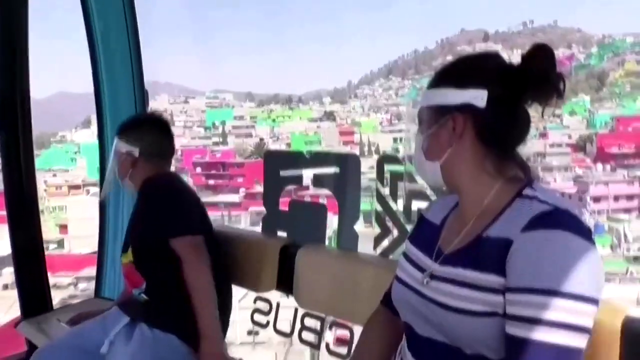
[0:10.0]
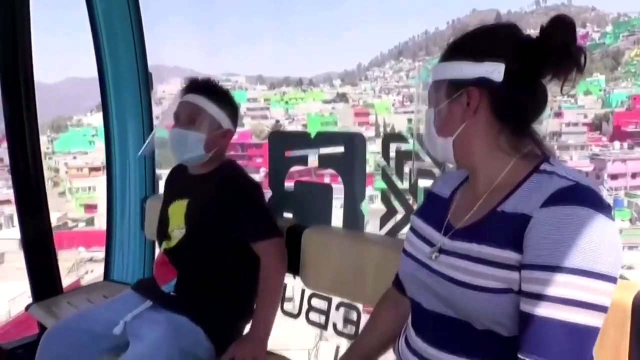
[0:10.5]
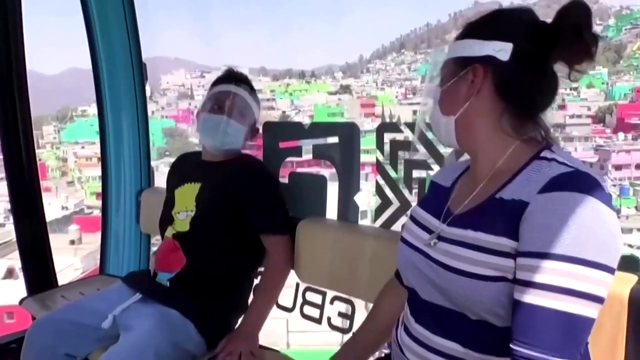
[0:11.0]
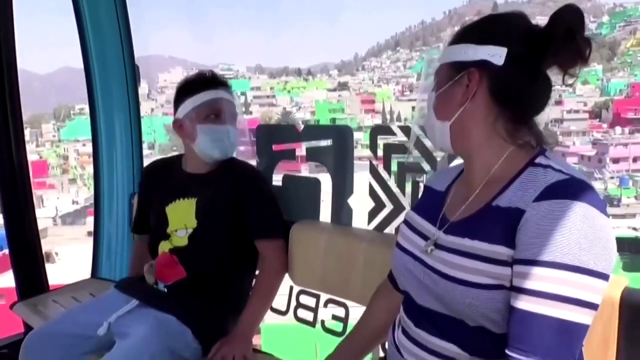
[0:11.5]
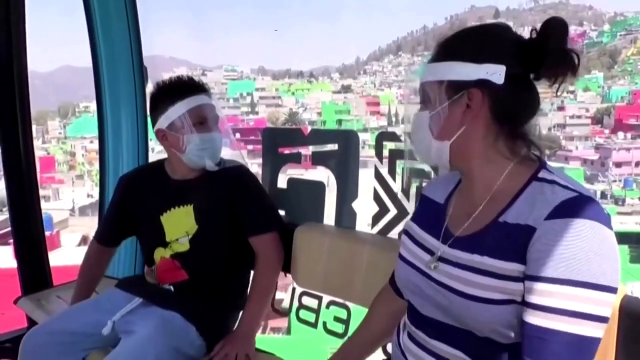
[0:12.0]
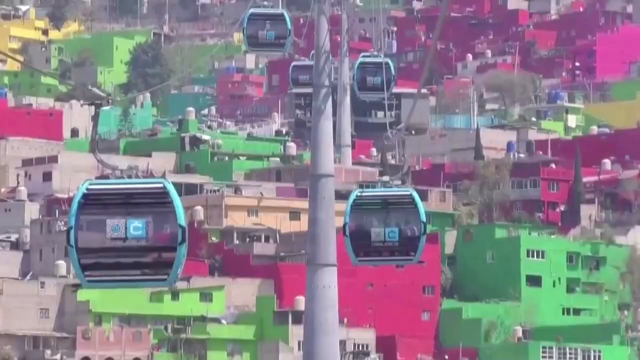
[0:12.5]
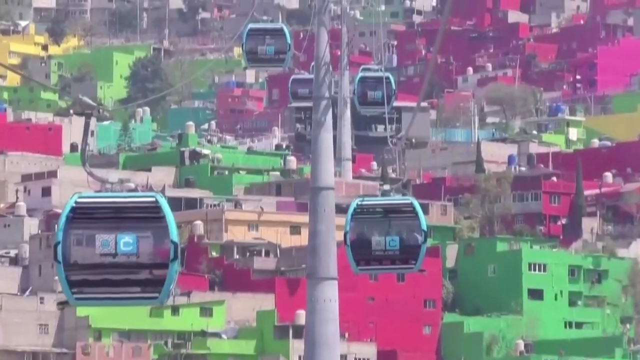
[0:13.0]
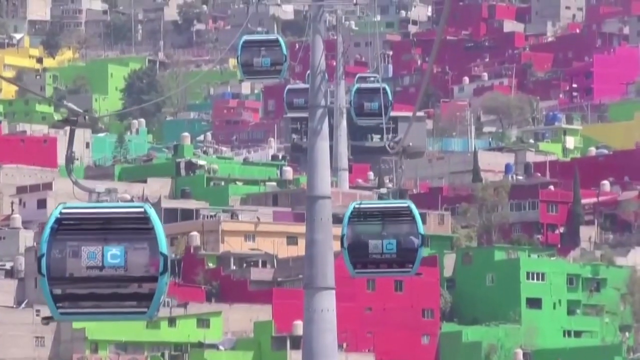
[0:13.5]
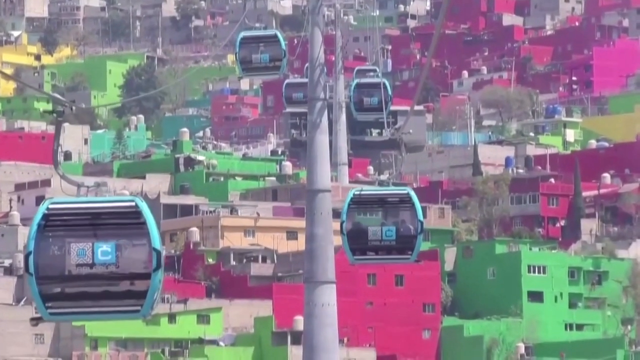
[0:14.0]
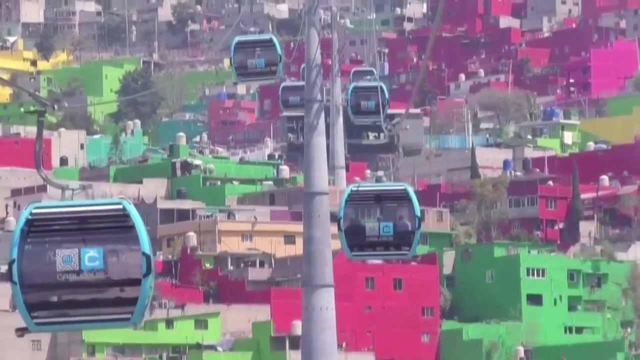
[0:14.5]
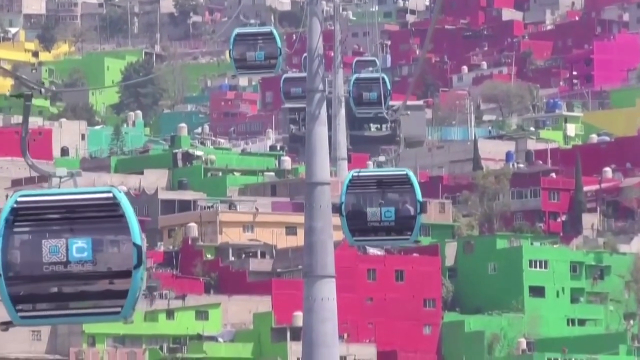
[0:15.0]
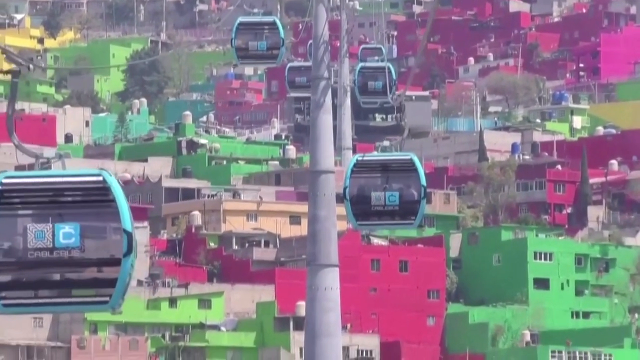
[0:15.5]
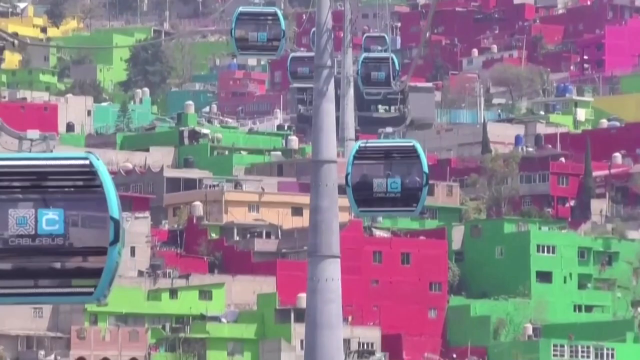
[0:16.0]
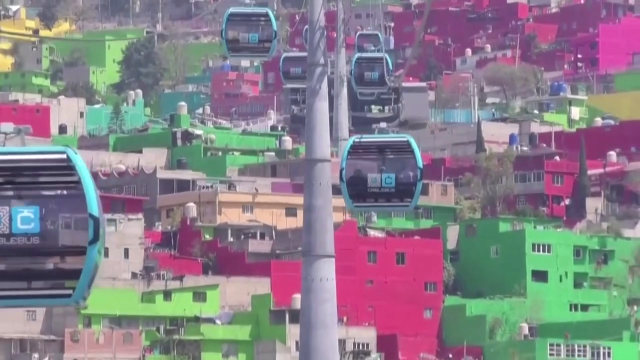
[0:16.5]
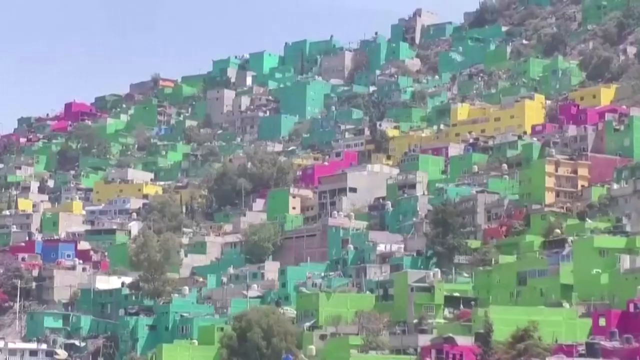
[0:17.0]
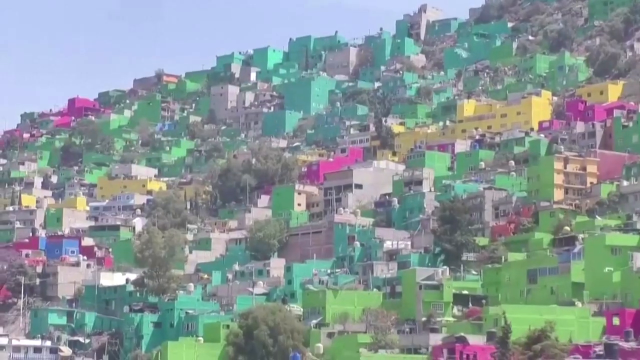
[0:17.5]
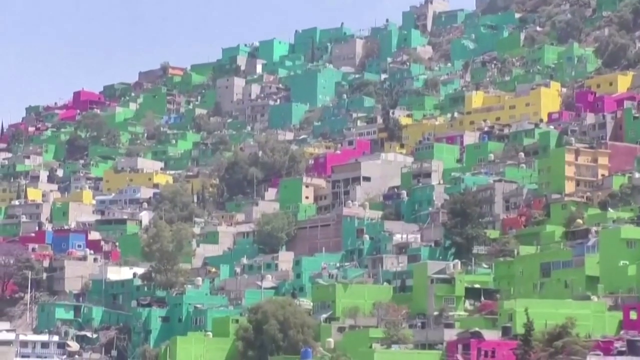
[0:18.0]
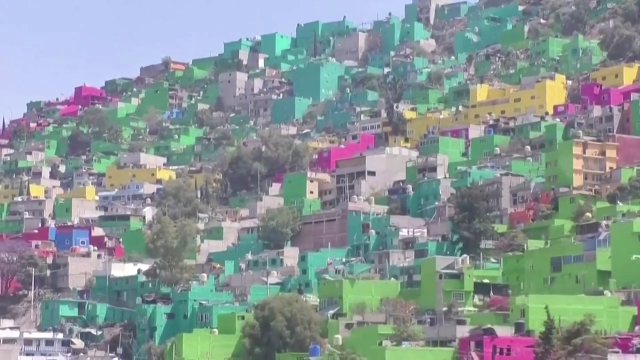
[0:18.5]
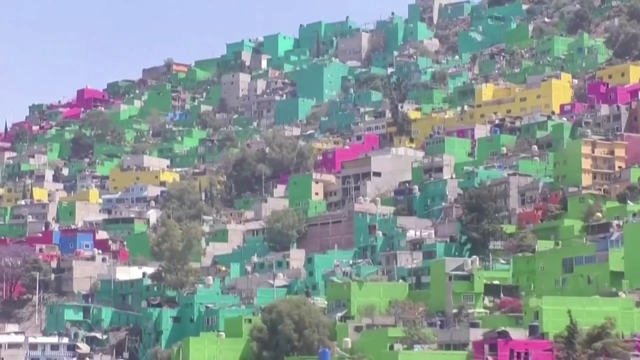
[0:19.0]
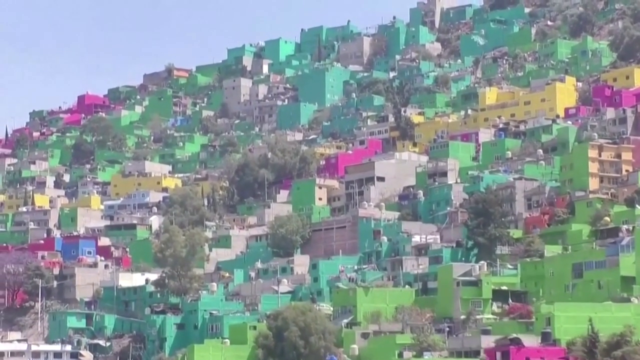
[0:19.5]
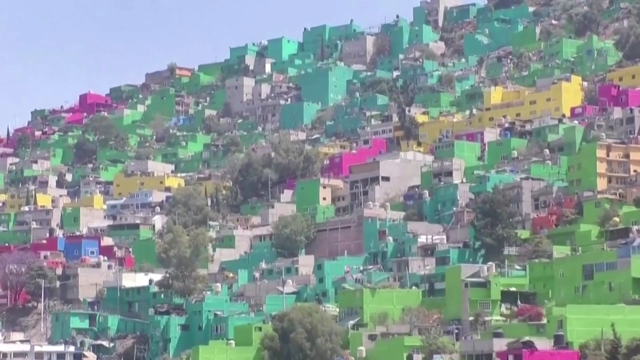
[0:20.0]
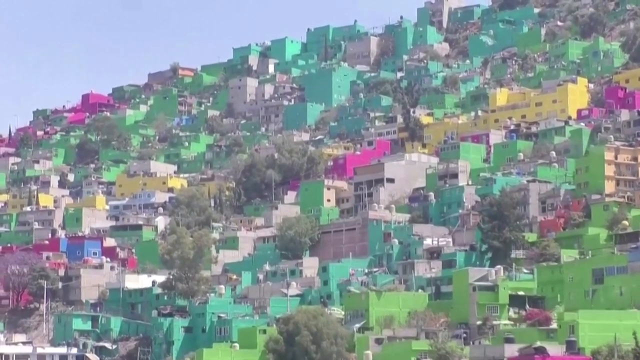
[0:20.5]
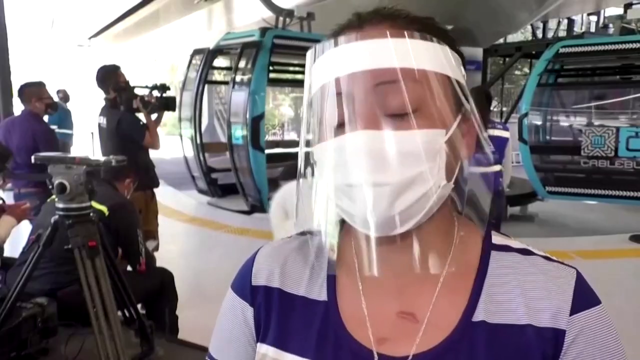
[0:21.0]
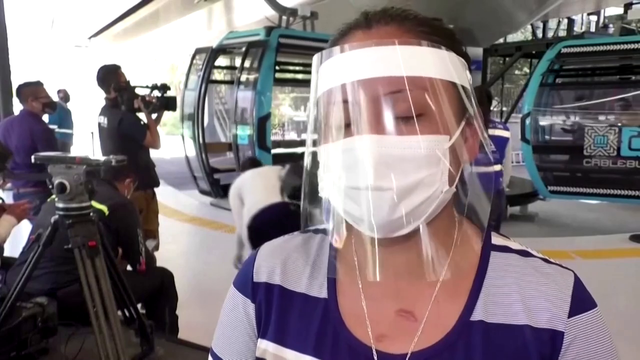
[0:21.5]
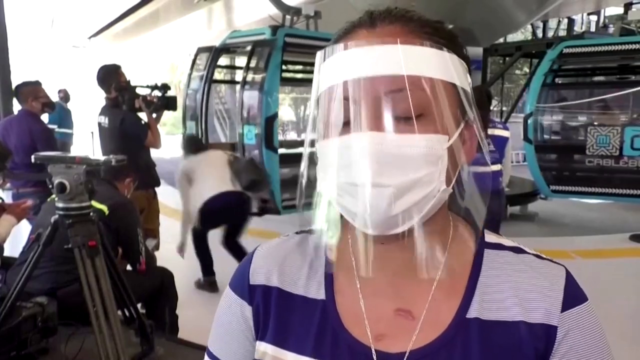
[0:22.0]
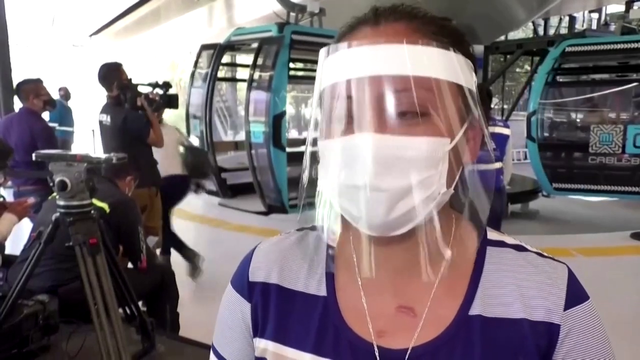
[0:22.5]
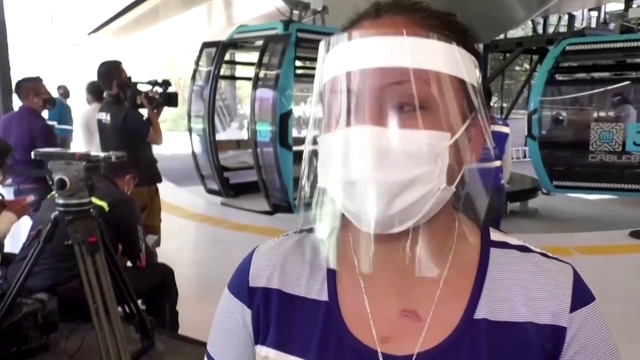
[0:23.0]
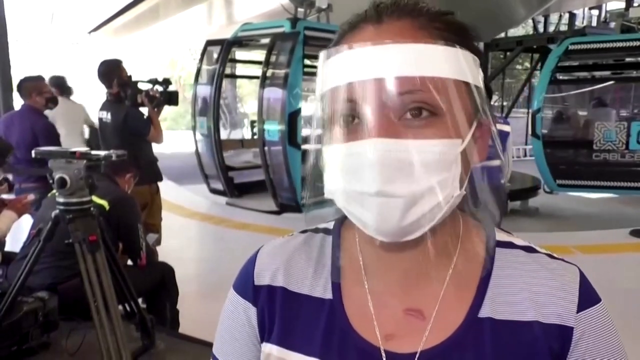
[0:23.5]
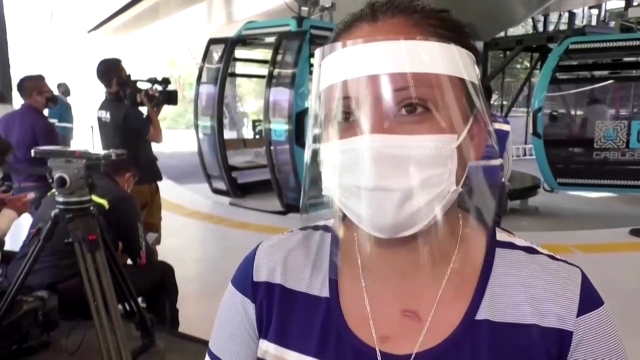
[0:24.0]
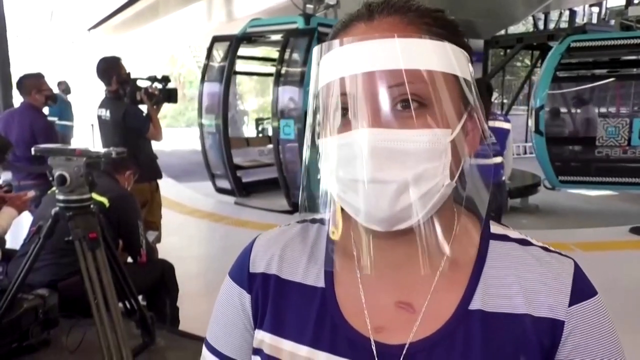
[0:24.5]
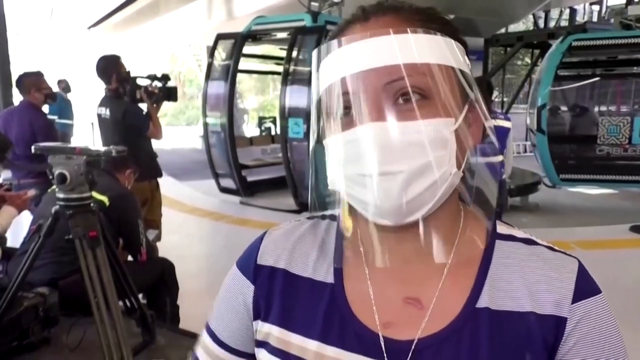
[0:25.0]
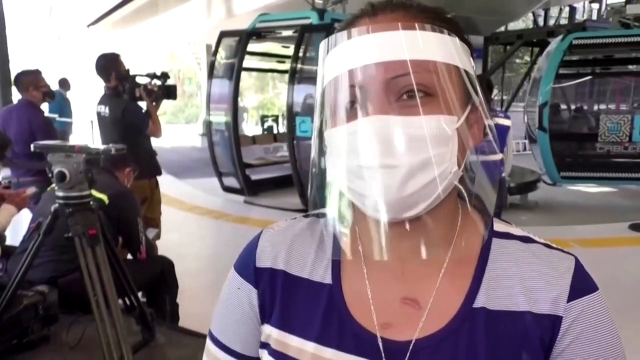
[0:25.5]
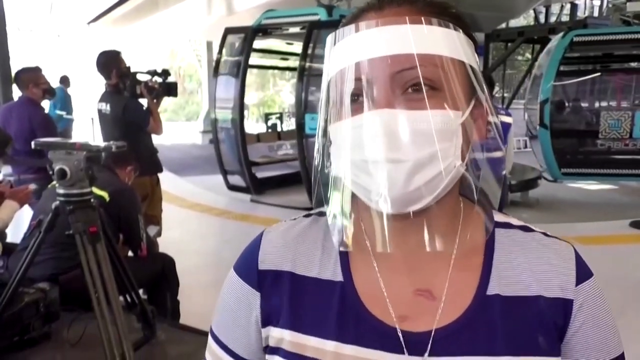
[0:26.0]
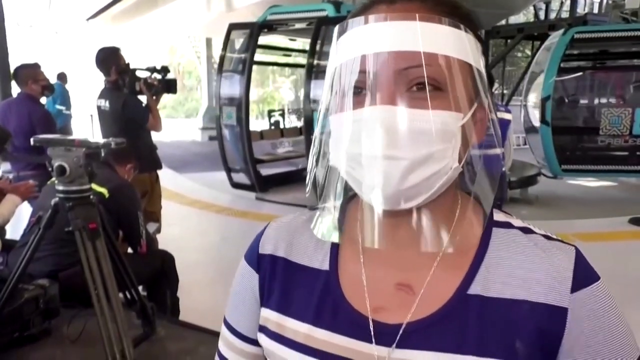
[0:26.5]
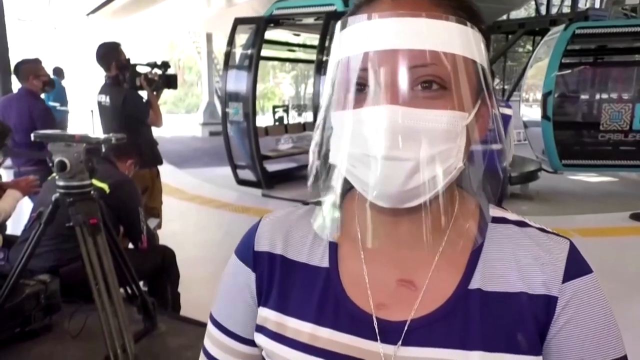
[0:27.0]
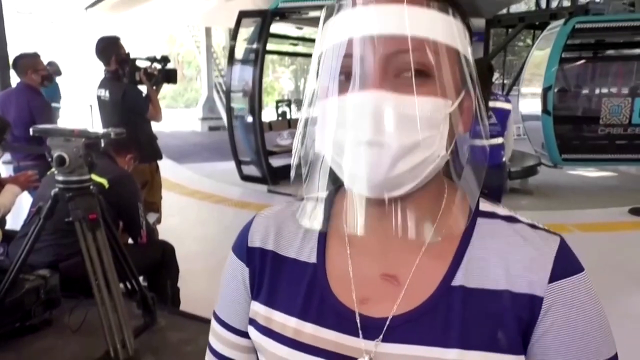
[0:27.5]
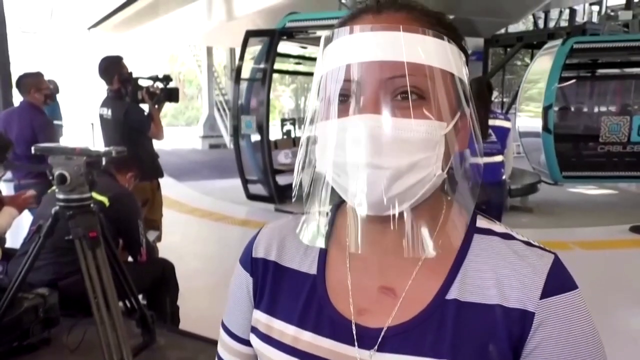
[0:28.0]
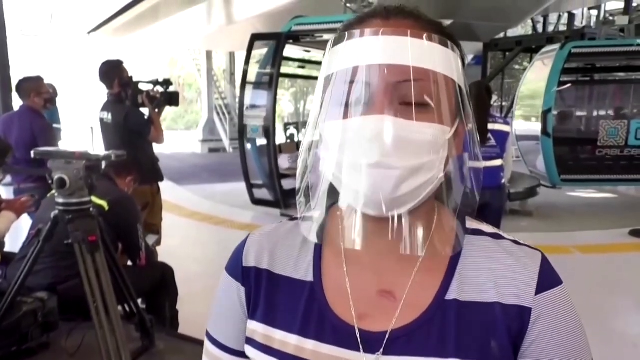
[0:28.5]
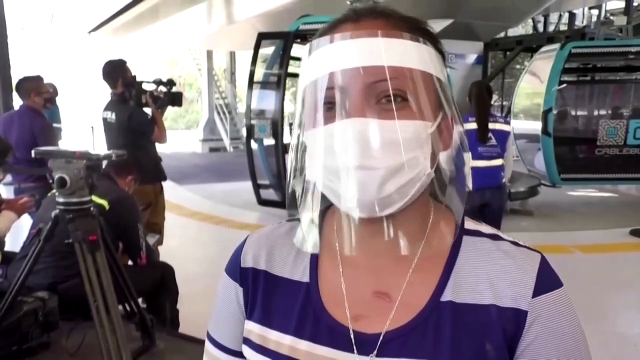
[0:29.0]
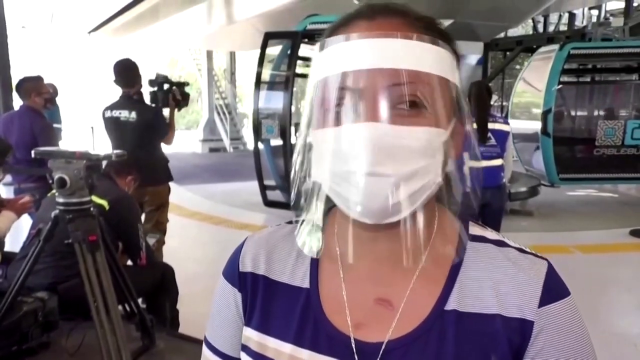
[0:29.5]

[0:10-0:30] Two people sit inside a little enclosure. Through it, a lot of buildings are visible, including some red buildings, with mountains in the distance. The woman has brown hair pulled back in a bun, wears a face mask like a COVID mask, and has on a blue and white striped top with a necklace. Next to her on the other side is a young boy, also in a face mask, wearing a black graphic t-shirt and gray pants. Both look out the glass window, then he quickly looks forward. He is wearing a Simpson shirt and kind of looks scared; when he looks at the woman, they are having a conversation. Next, a bunch more of these enclosures attached to a cable move up over the buildings, which are painted in very bold, vibrant colors: teal, yellow, pink, blue and green. The camera passes over some of these buildings. Then a woman wearing a mask with a shield over her face talks to the camera. Some people stand in the background, one holding a camera and recording everything, while another woman ducks down and walks by in the background. The woman has a scar on her chest.